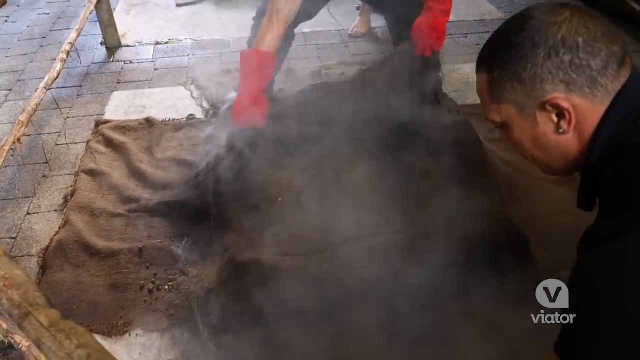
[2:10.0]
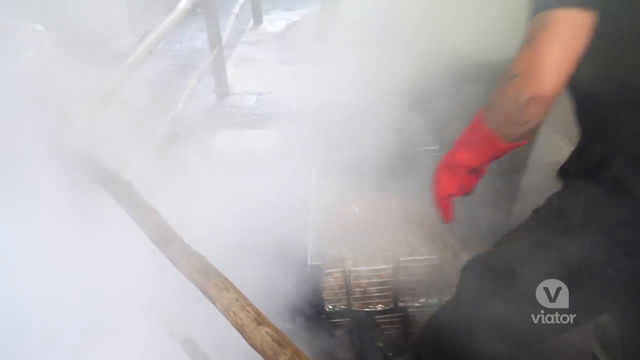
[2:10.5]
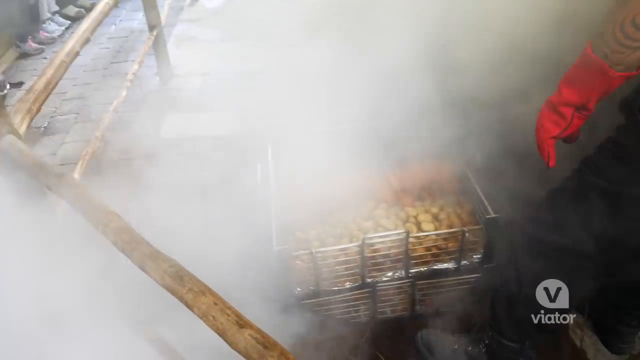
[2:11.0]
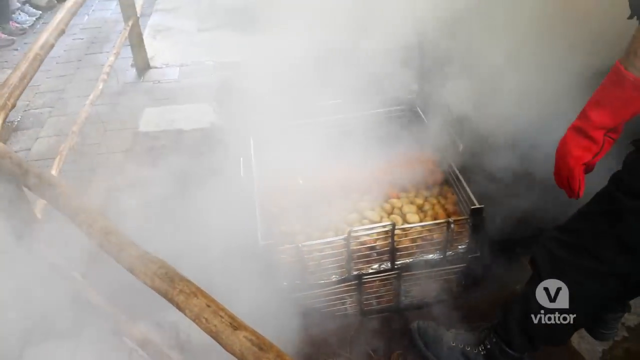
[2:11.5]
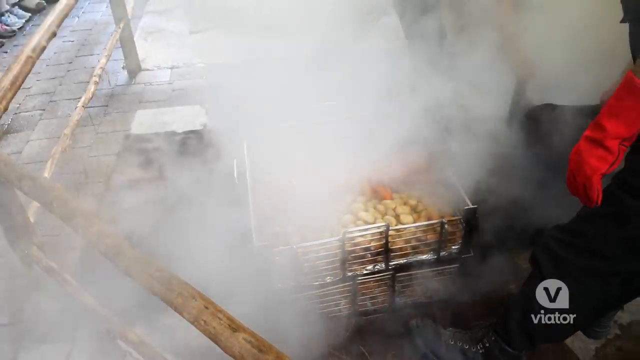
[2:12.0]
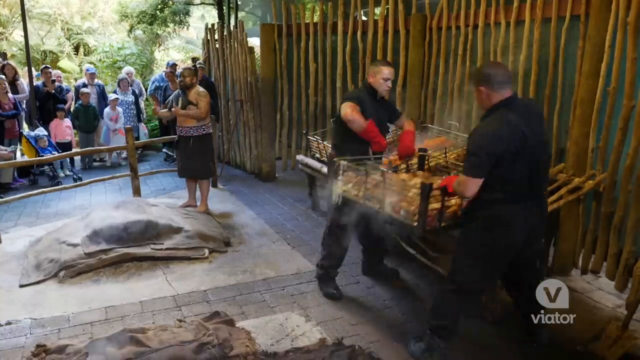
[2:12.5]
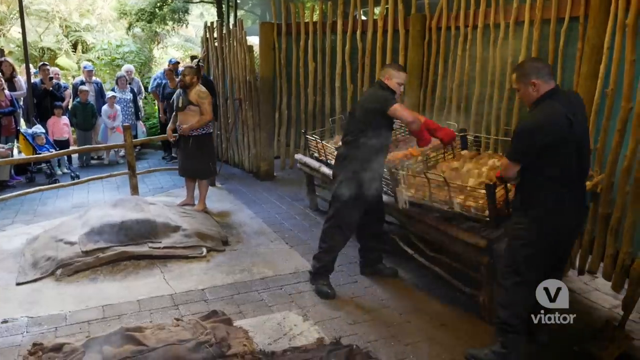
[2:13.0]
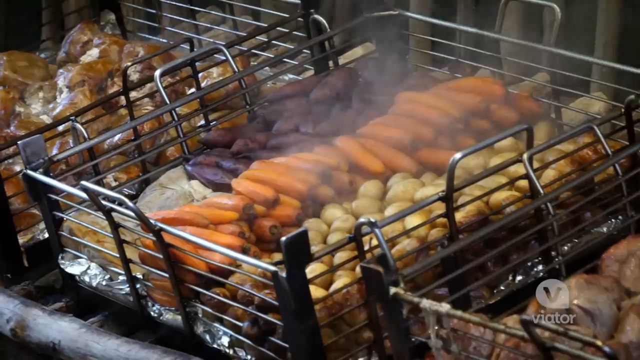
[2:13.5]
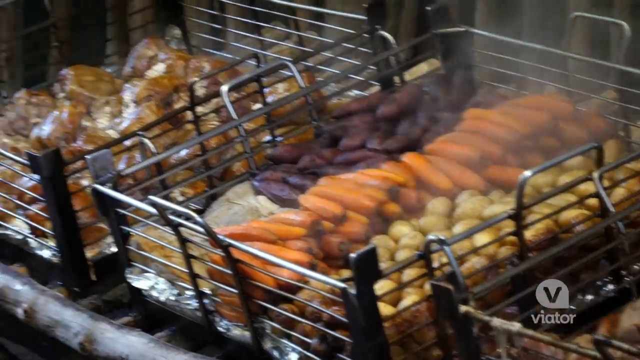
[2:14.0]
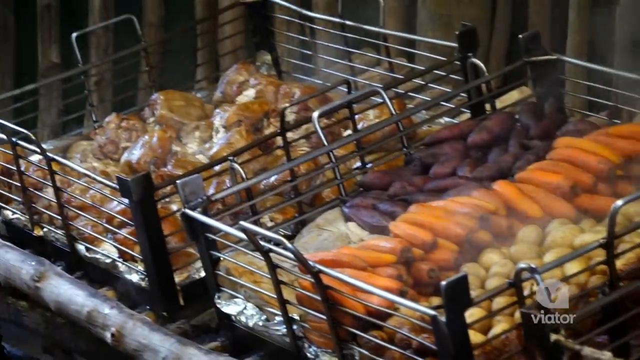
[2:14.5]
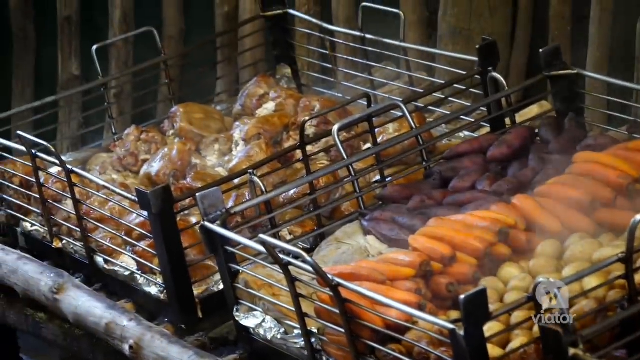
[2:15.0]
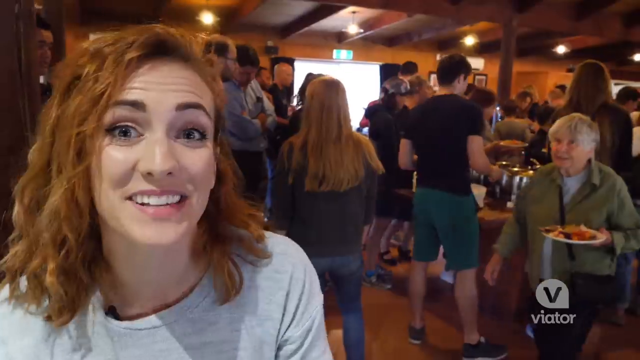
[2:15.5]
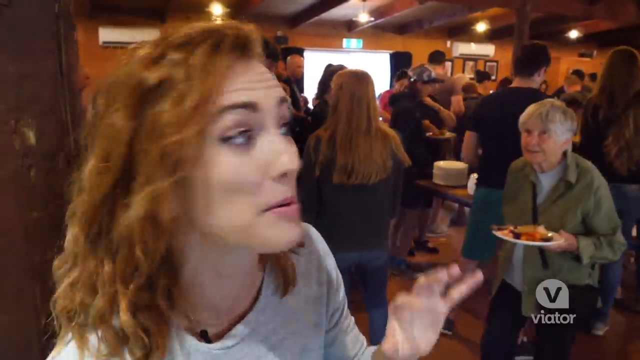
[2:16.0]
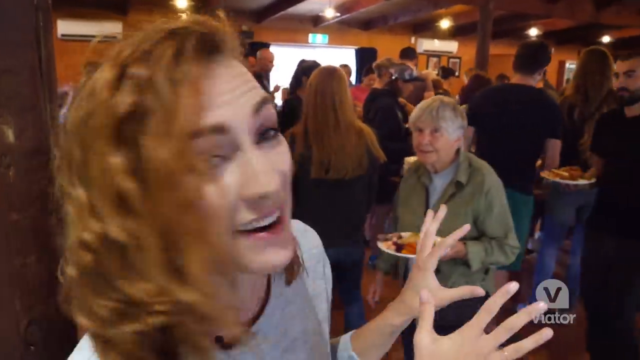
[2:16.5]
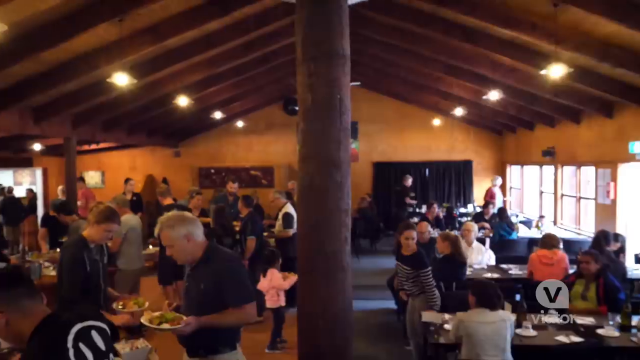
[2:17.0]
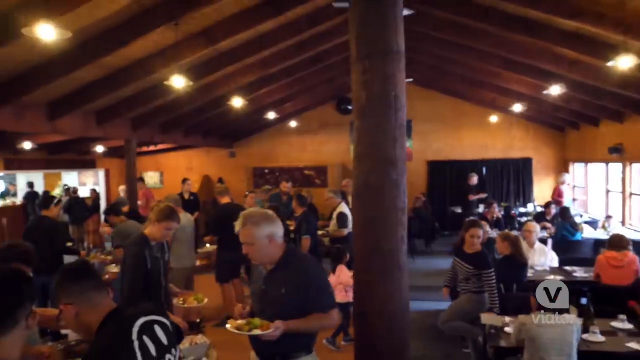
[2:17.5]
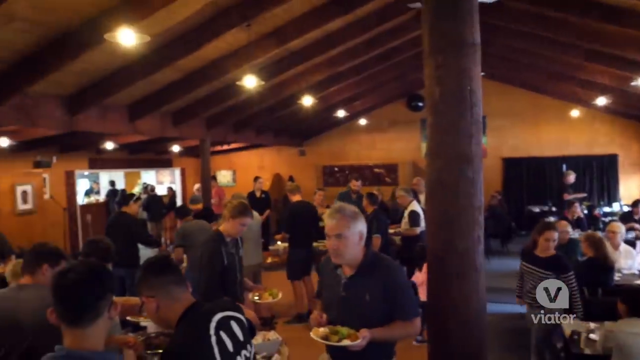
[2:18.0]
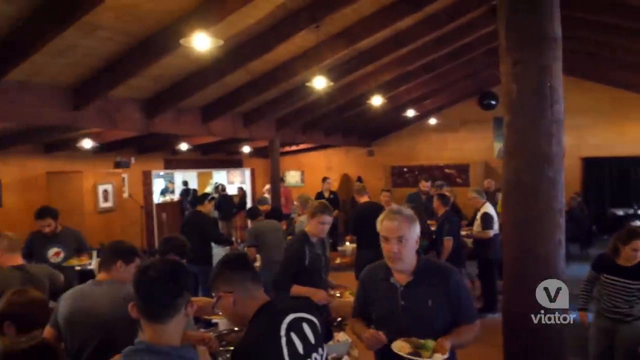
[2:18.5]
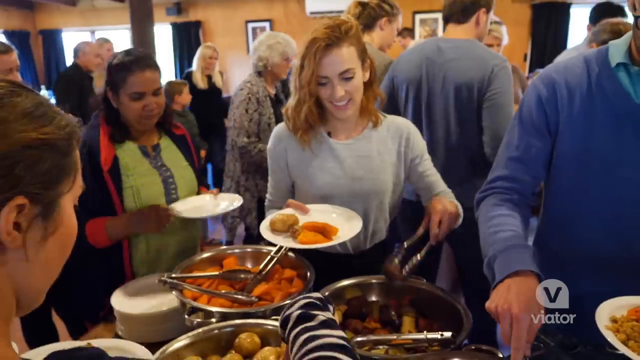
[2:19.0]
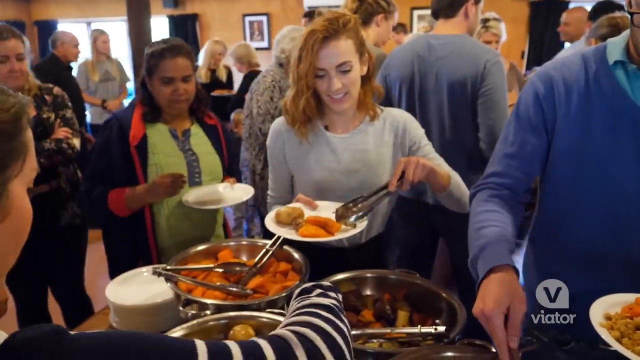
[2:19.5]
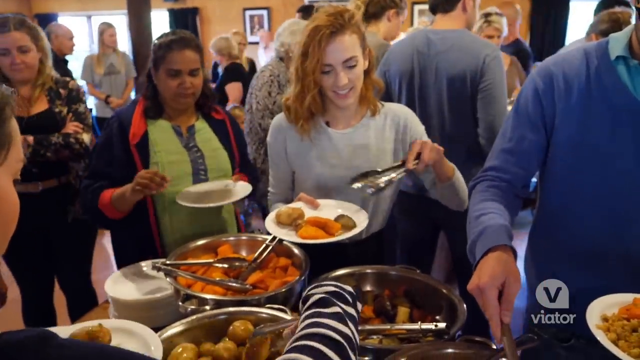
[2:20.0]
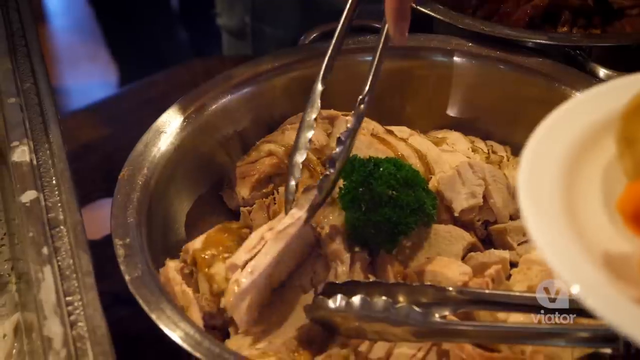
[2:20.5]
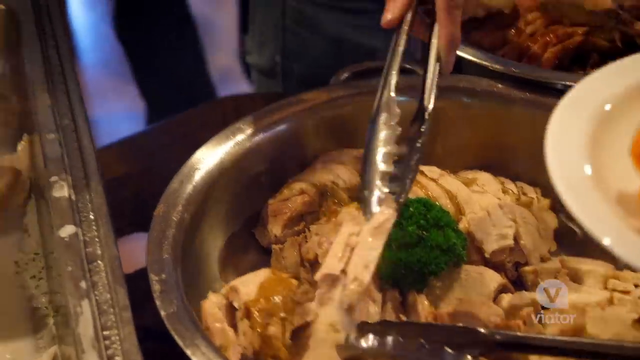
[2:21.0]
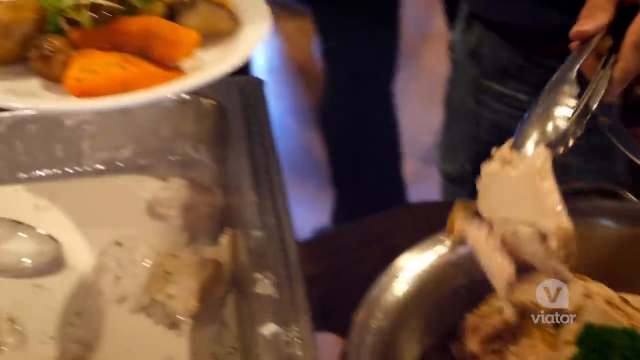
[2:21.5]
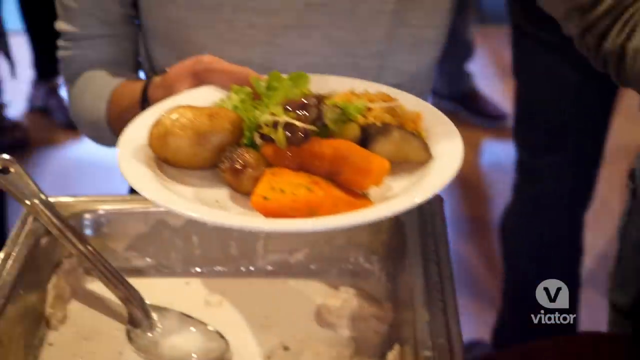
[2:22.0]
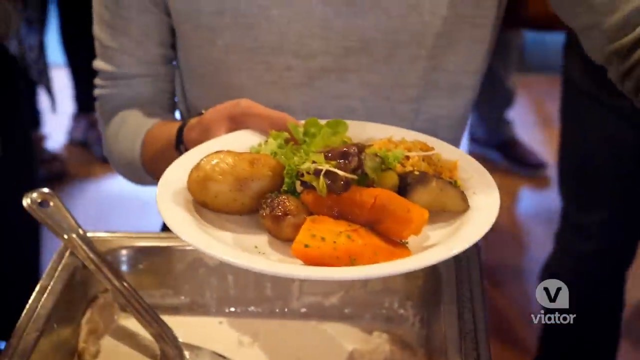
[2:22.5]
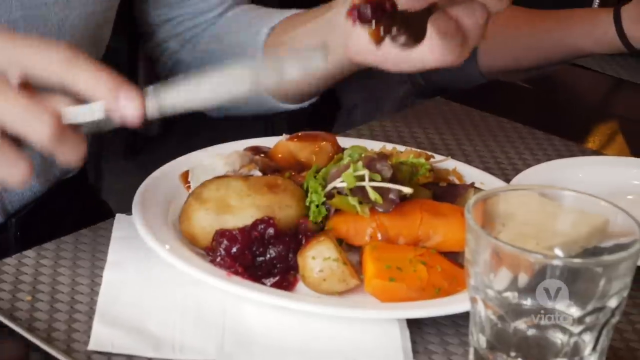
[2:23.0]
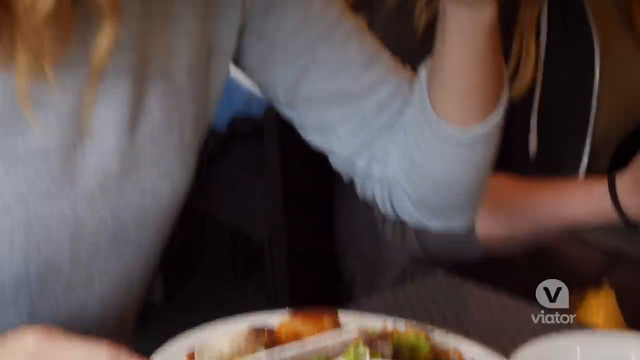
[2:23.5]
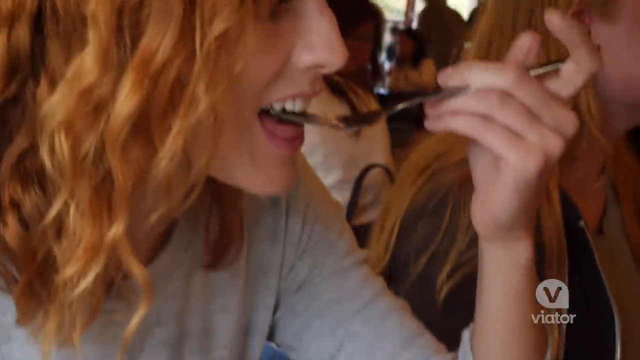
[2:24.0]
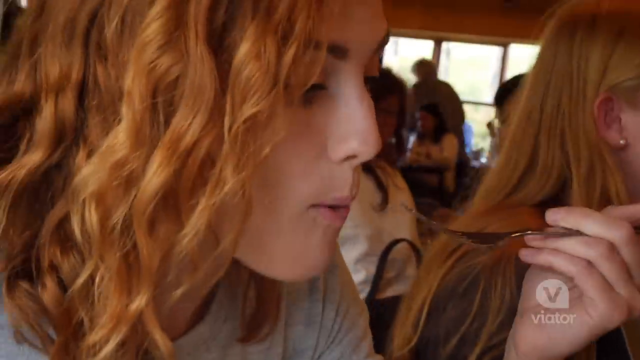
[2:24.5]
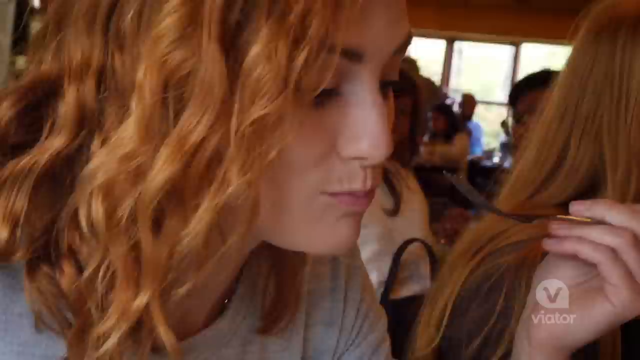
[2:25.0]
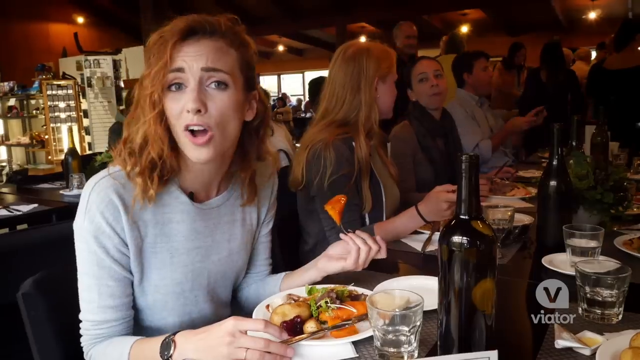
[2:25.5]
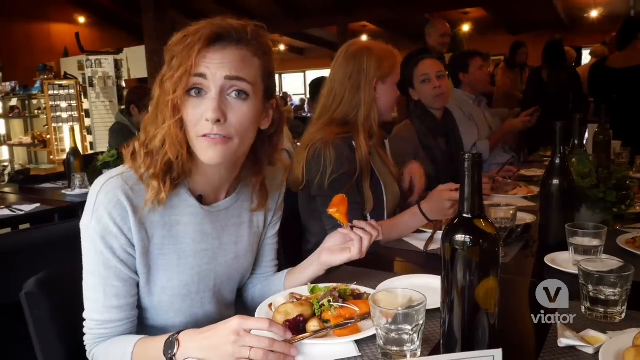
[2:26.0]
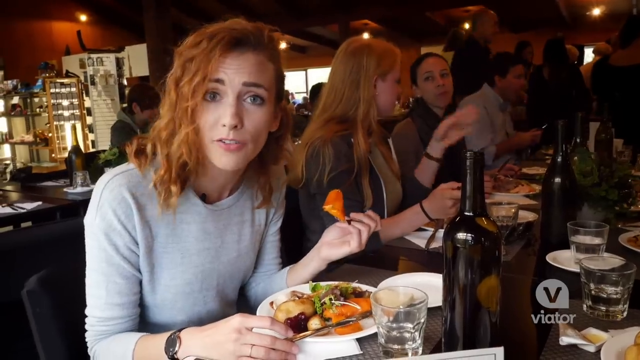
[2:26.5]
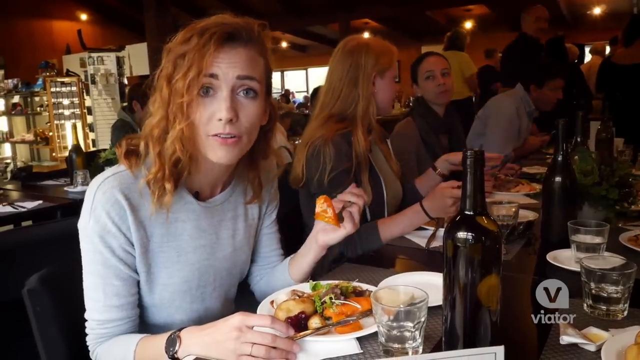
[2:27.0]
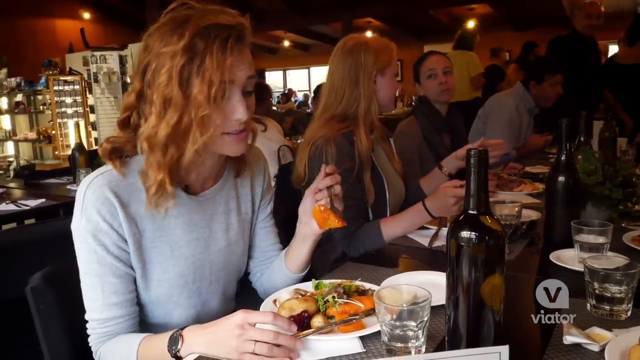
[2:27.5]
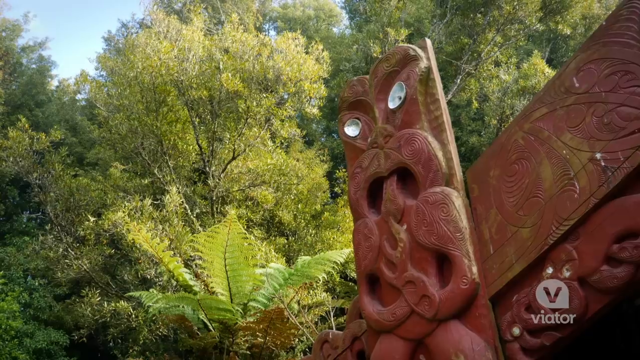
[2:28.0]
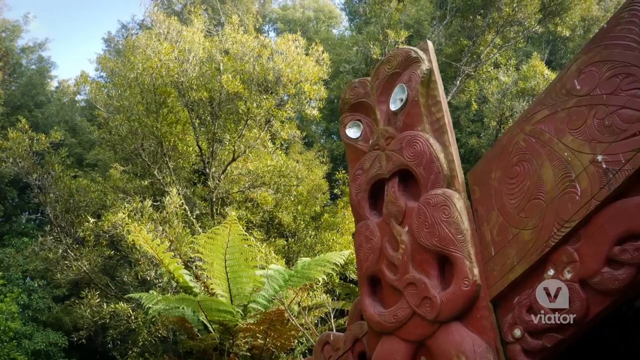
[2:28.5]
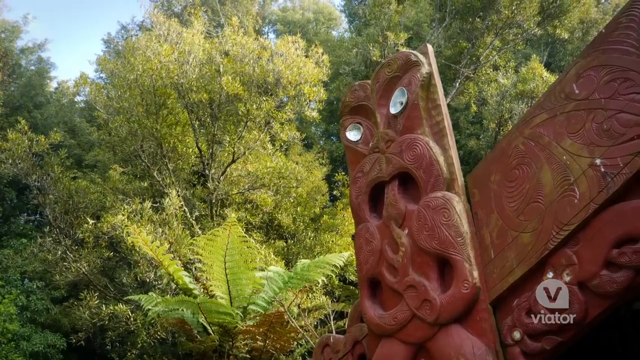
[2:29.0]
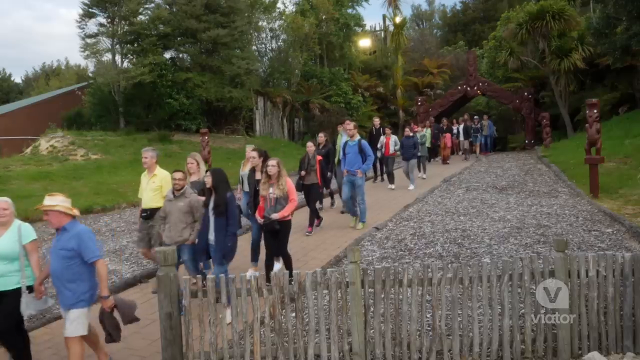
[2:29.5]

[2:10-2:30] Two men with a basket of food, apparently different vegetables, put it on a table; this looks to be dinner being served, and the vegetables were apparently what was cooked under the black tarp. The host talks to the camera in what looks like some type of cafeteria. At a table she puts different types of food on her plate, apparently carrots, potatoes and some chicken, and also some type of berry thing. While she loads up her food, there are a lot of people behind and in front of her, looking like a big crowd. She sits down, eats, and after trying the food talks to the camera with a bite on her fork that looks like something orange. She sits next to two women and a man at the table while eating and speaking to the camera.